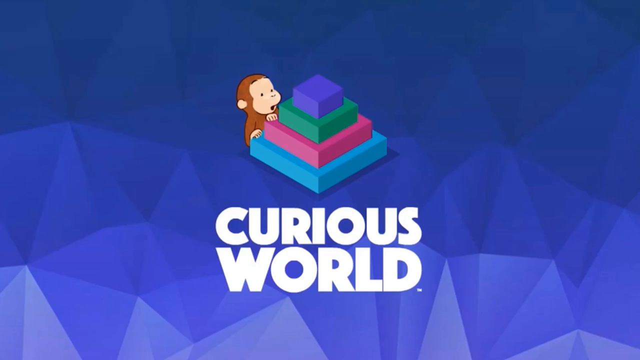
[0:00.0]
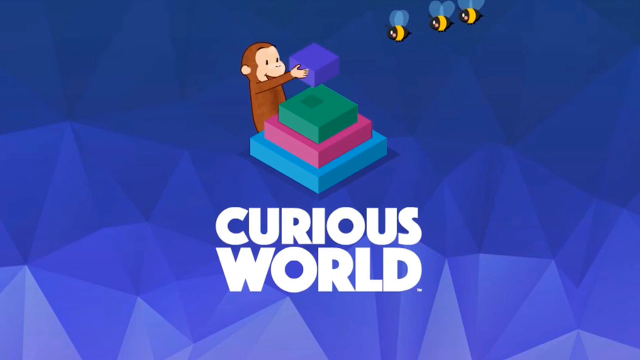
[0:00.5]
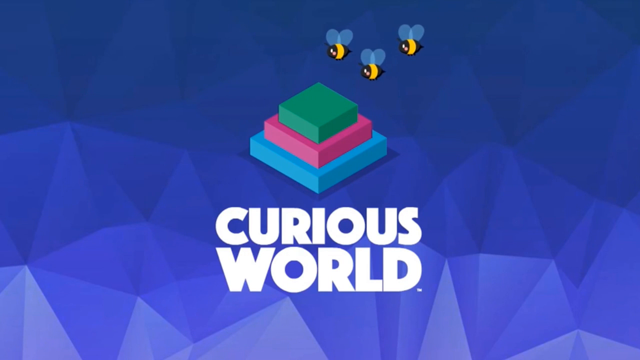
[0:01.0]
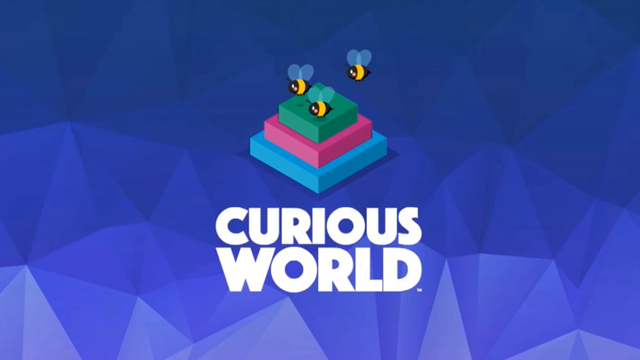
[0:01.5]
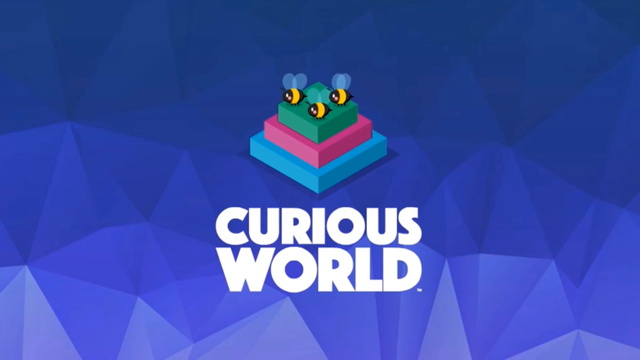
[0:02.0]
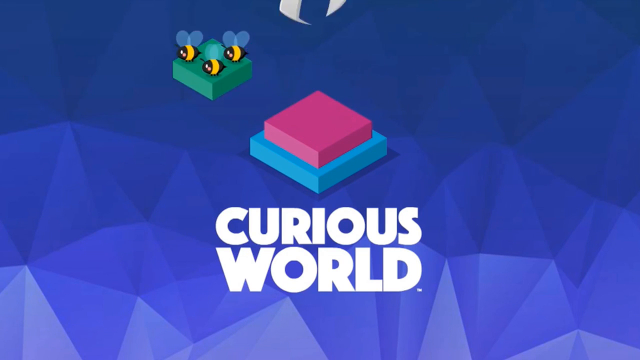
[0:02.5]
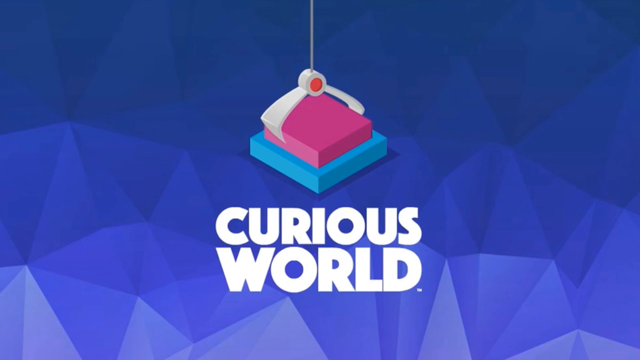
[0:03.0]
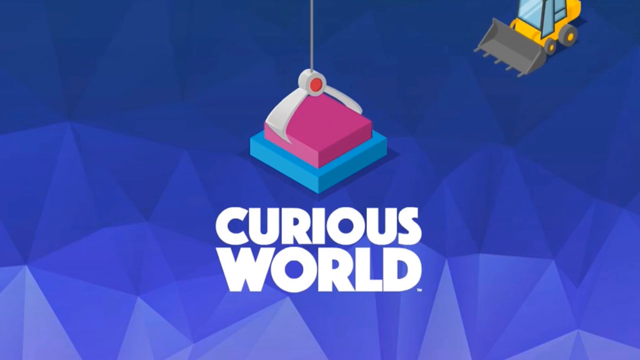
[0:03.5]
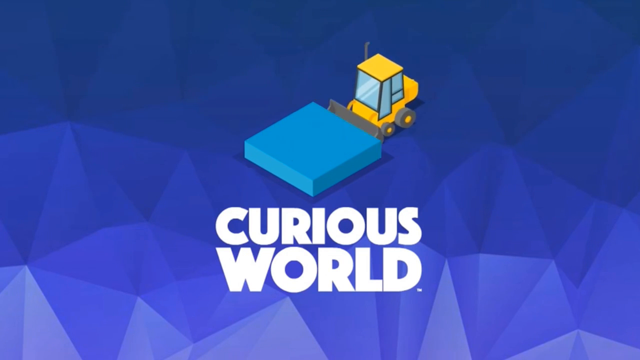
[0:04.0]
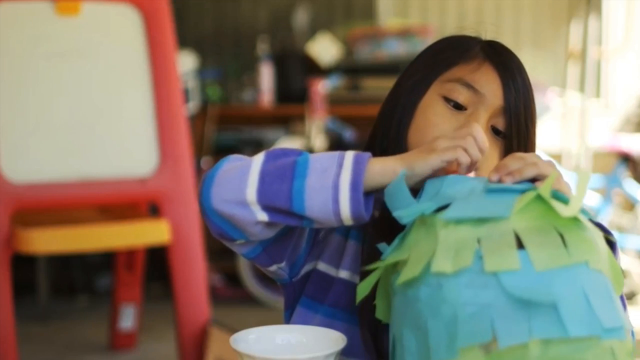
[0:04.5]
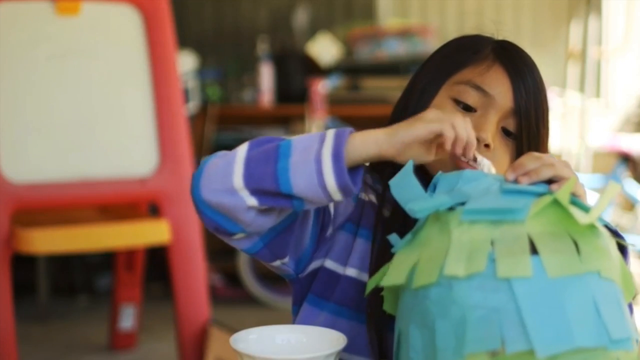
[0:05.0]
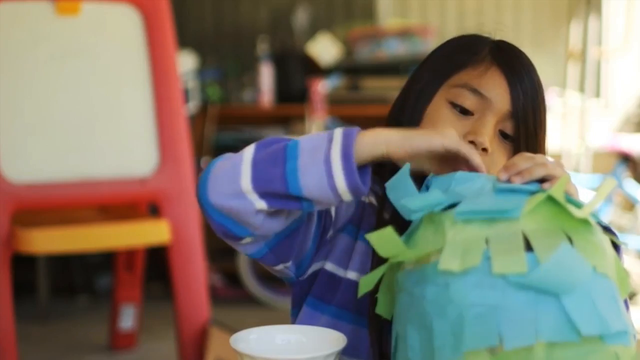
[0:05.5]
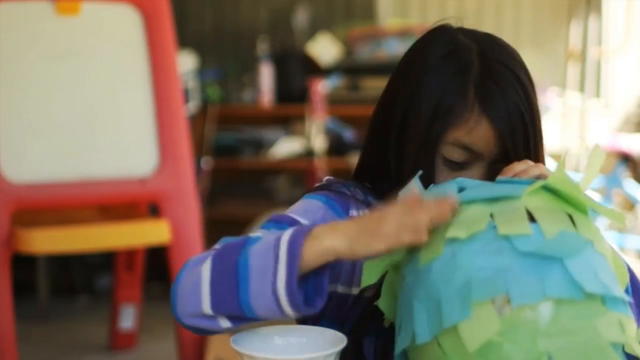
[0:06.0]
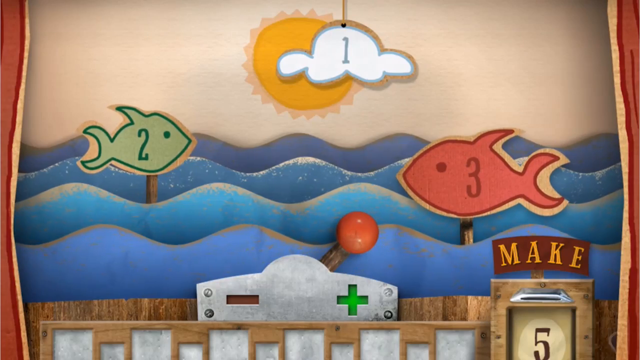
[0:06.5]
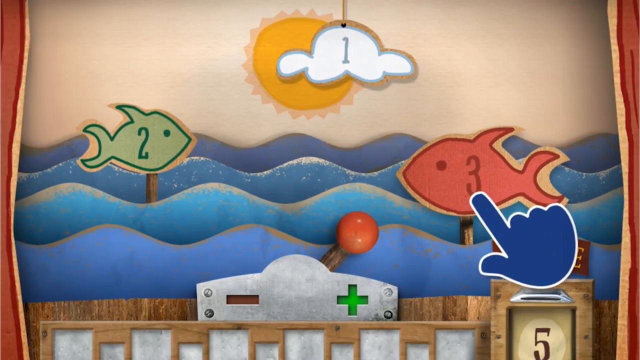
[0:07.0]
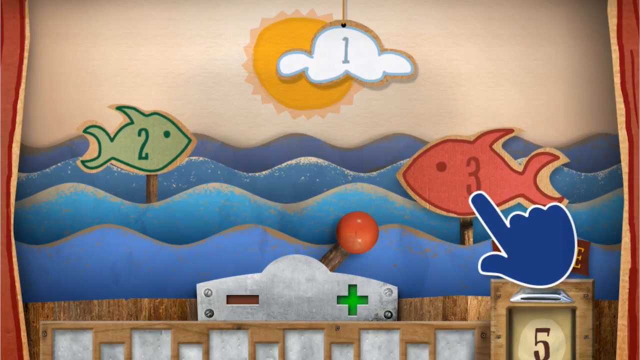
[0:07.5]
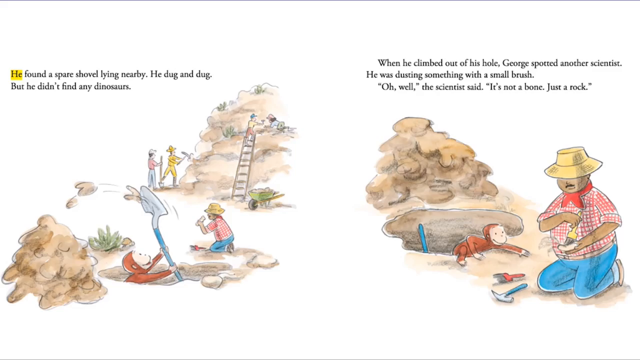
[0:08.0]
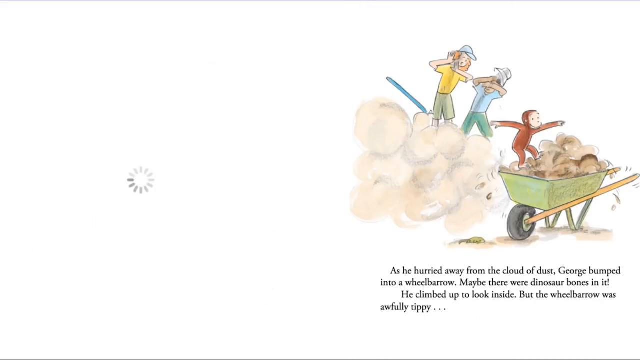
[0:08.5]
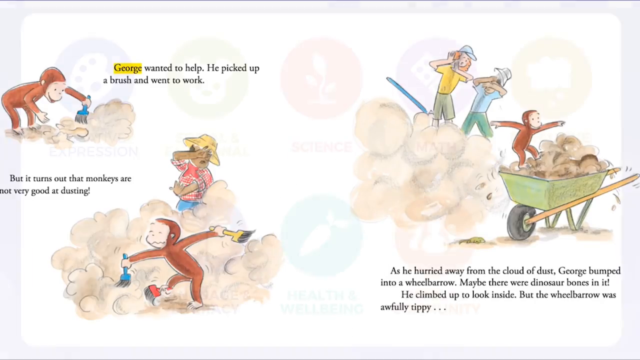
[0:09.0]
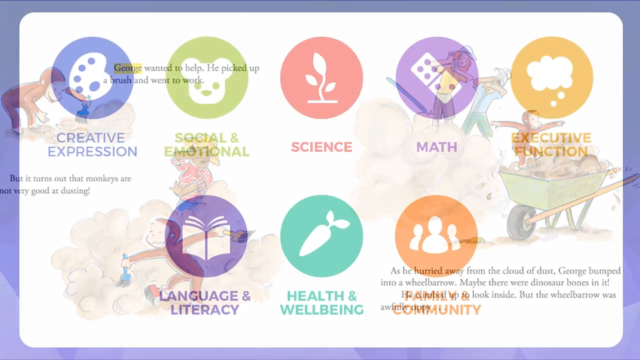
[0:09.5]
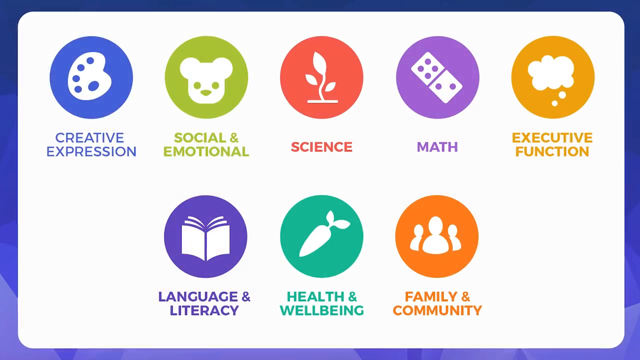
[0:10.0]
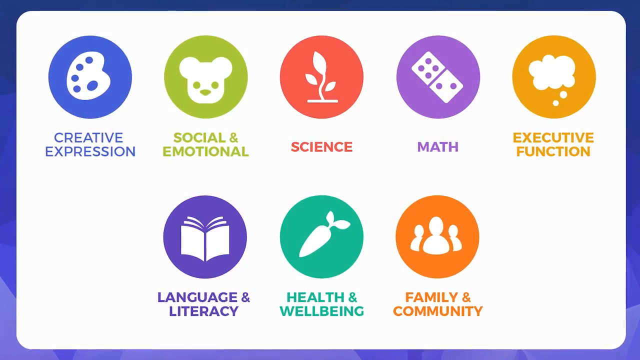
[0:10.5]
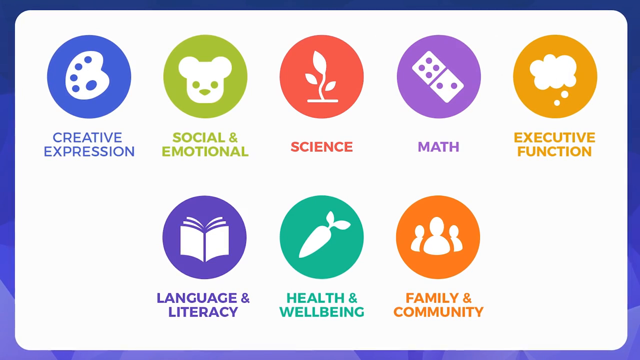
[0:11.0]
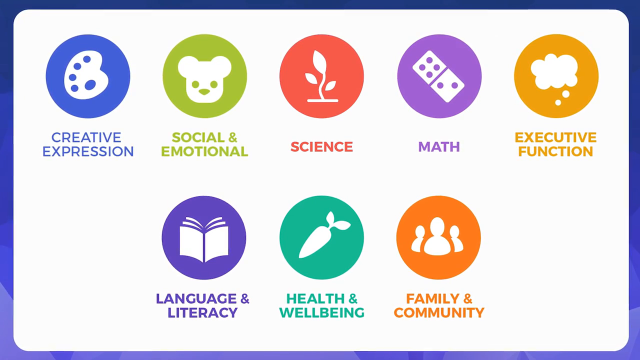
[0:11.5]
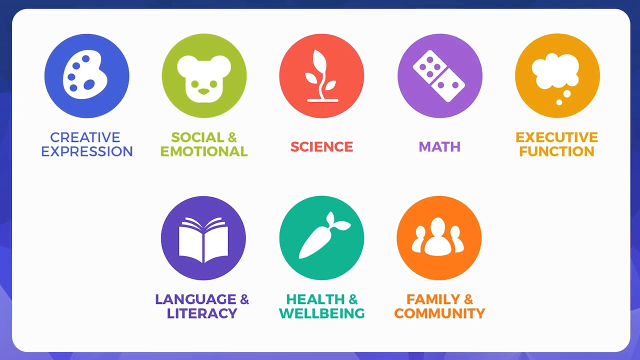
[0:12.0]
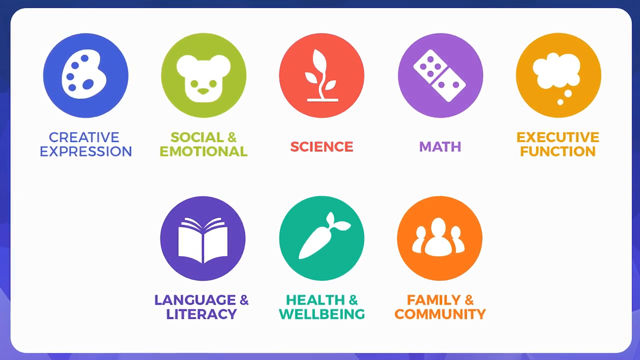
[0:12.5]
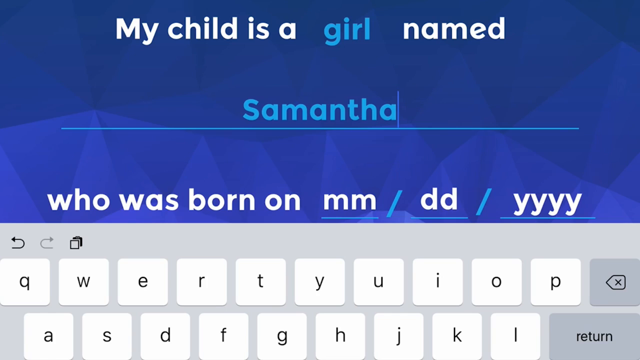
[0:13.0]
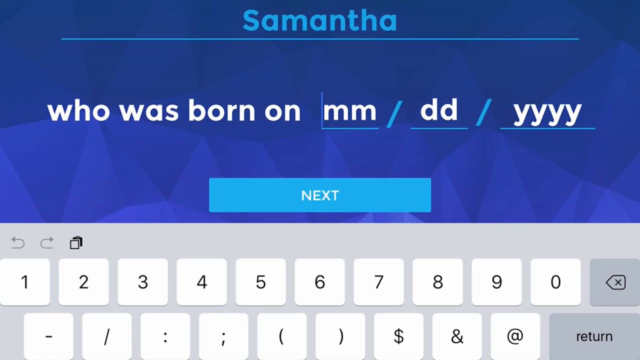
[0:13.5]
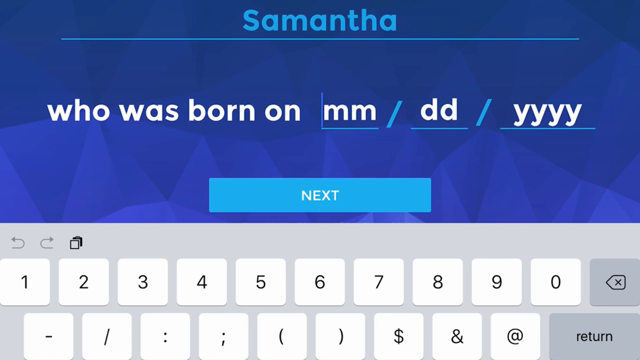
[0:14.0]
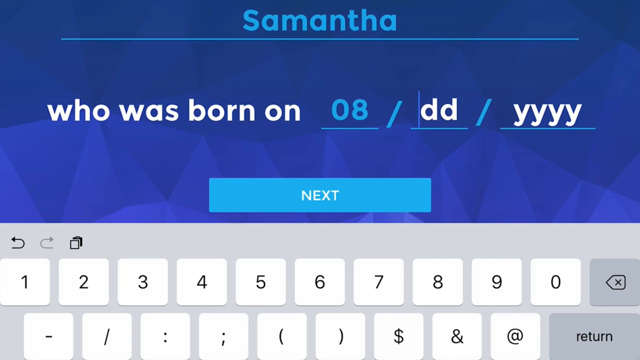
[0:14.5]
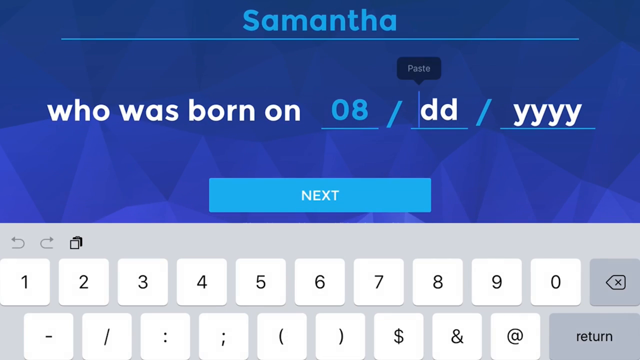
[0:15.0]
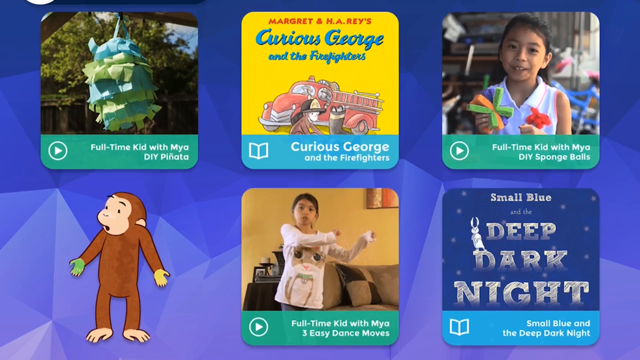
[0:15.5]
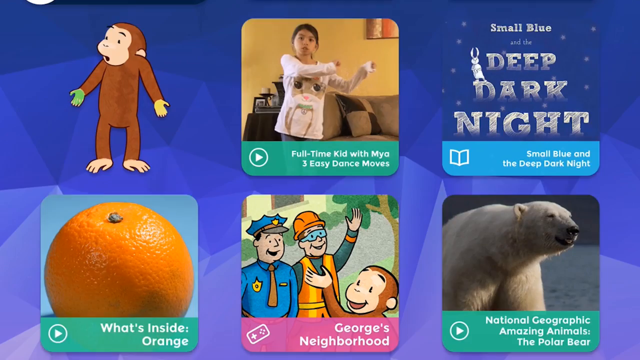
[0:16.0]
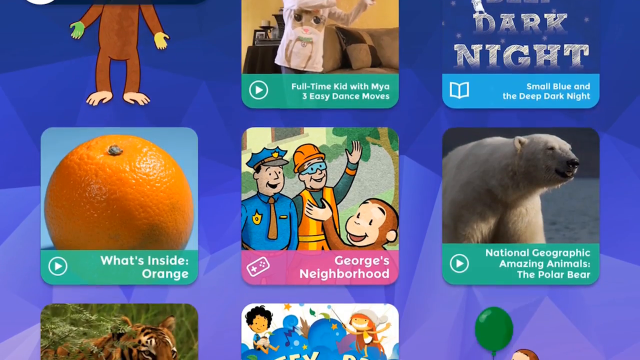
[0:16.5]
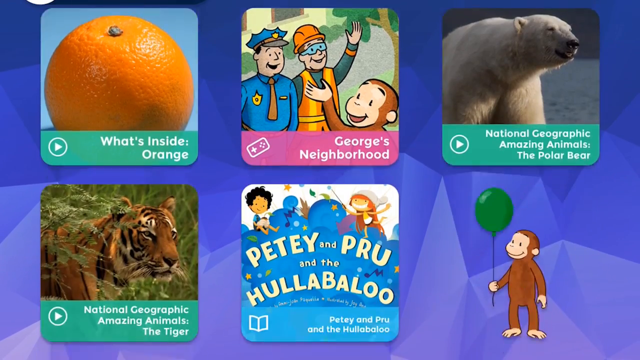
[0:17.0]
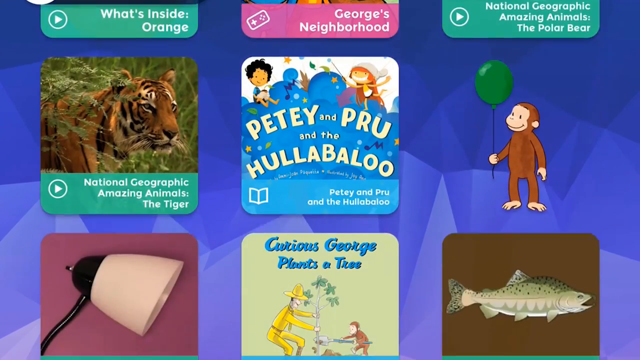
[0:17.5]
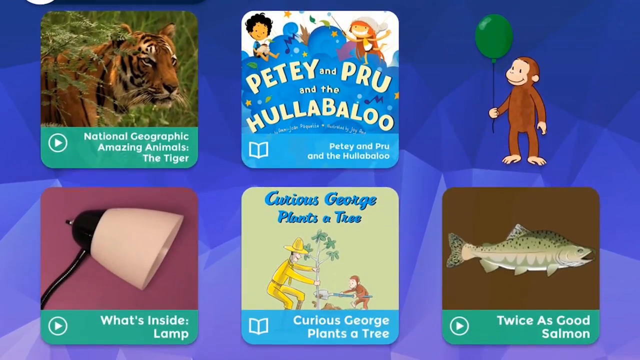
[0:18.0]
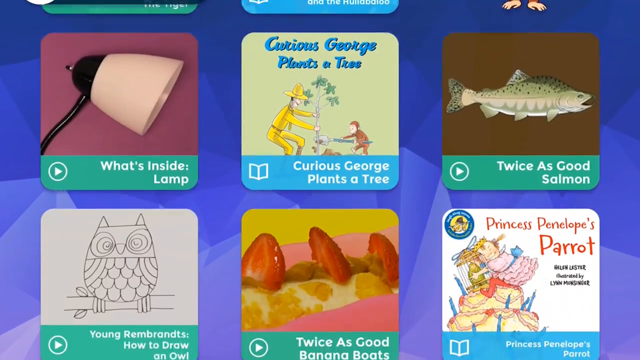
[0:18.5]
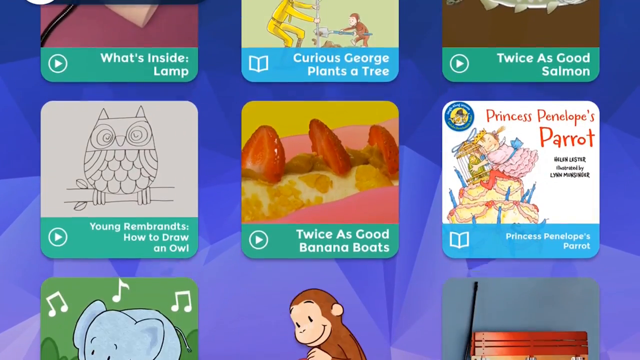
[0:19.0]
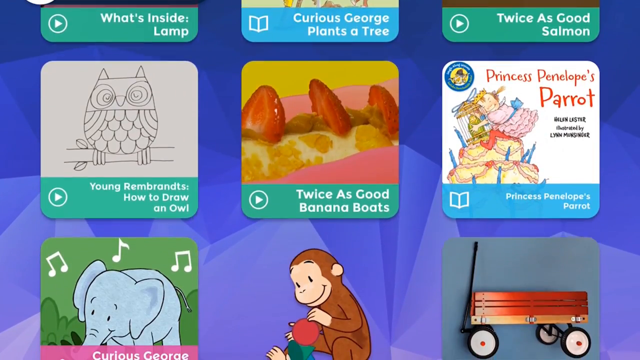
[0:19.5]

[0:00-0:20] On screen, a monkey stands behind what seem to be building blocks, with text reading "curious world." The monkey takes the smaller block and disappears. Three bees fly in and pick up the next block, a crane takes the following block, and the last block is taken by a dump truck. Next, a child appears who seems to be packing something in her backpack. She is a girl with black hair, wearing a sweater with blue and white stripes, and she has a green and blue backpack. Then there are carvings of fish labeled 2 and 3, a river, and a cloud labeled 1, and a blue hand places the fish labeled 3. Next comes a page of a children's book that seems to tell a story about George, who wanted to help pick up the brush and went to work. The following page shows a variety of shapes with subjects written underneath them: "creative expression, socio and emotional, science, math, executive function, language and literacy, health and well-being, family and community." The next page has a keypad and text that reads "my child is a girl named Samantha who was born on August." After that there are photos of a monkey, a young kid, a dark night, an orange, George's neighborhood, National Geographic, animals, the polar bear, National Geographic Amazon animals, and the tiger; these seem to be kids' TV shows.